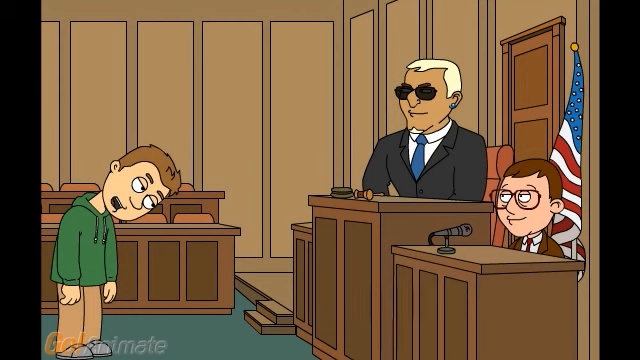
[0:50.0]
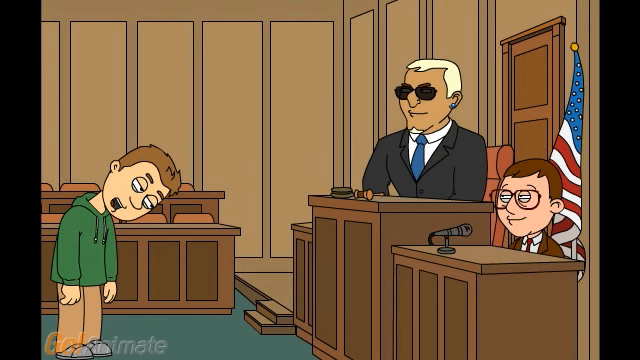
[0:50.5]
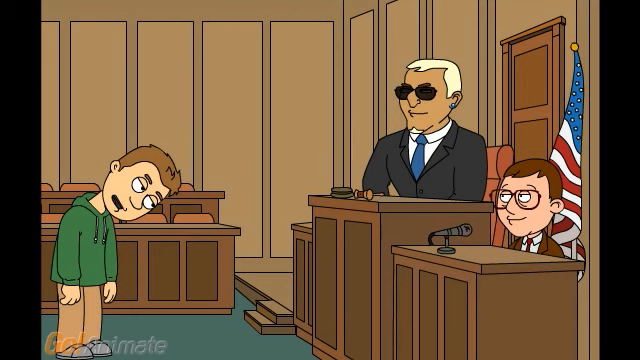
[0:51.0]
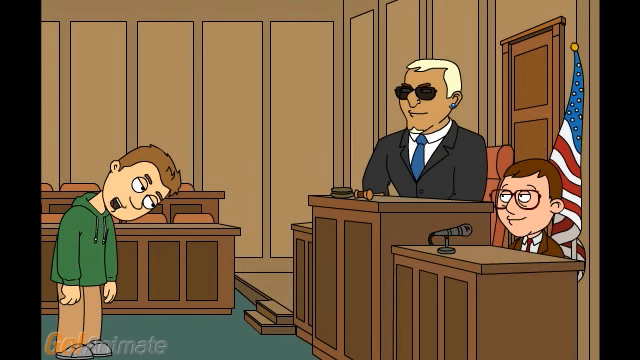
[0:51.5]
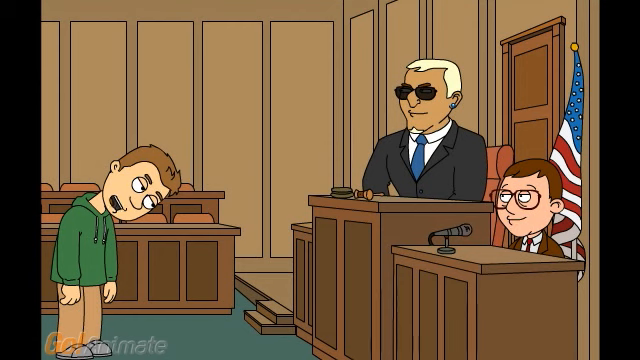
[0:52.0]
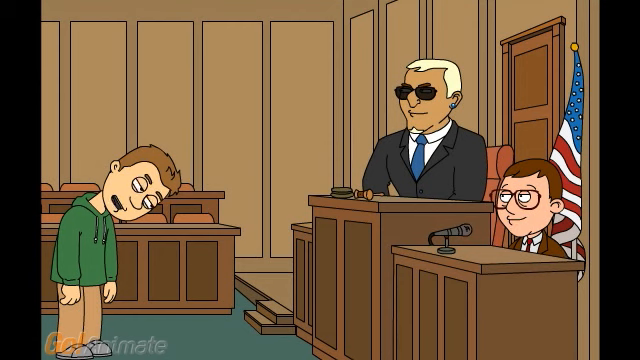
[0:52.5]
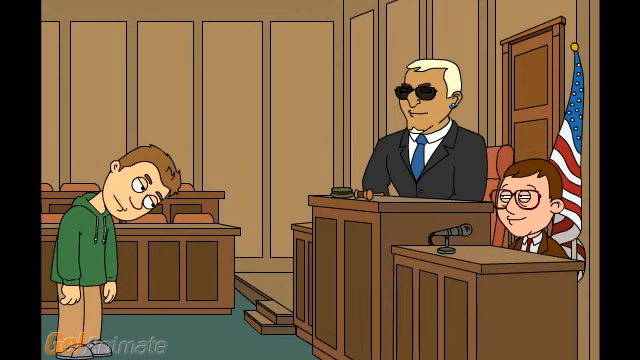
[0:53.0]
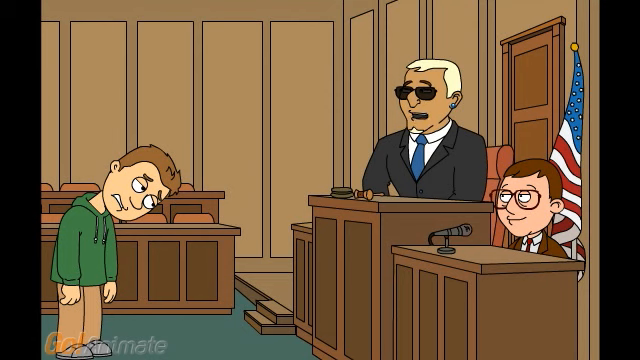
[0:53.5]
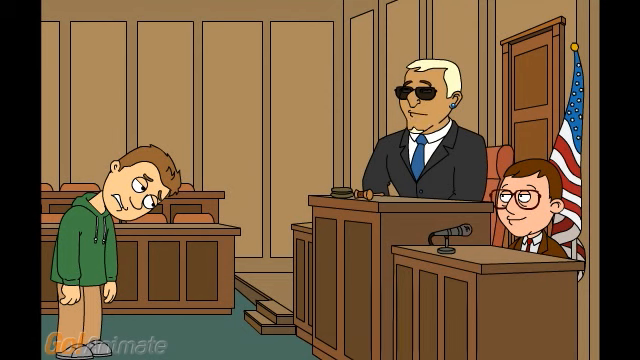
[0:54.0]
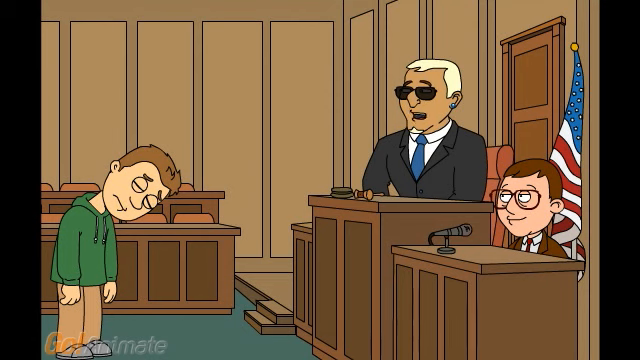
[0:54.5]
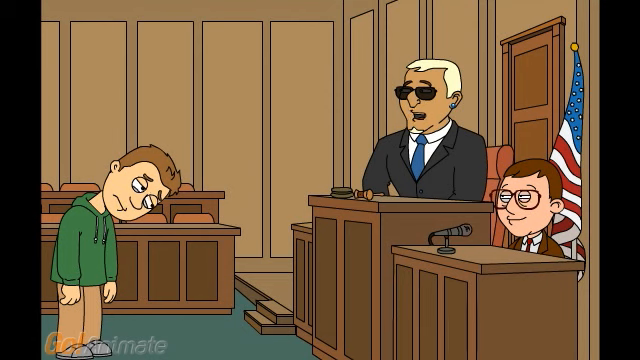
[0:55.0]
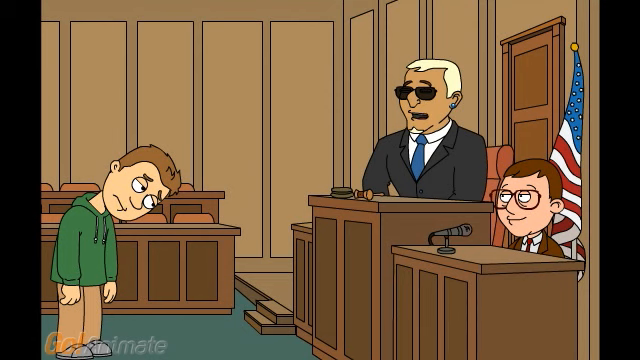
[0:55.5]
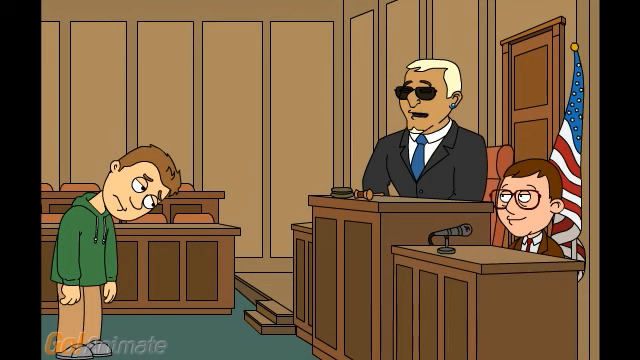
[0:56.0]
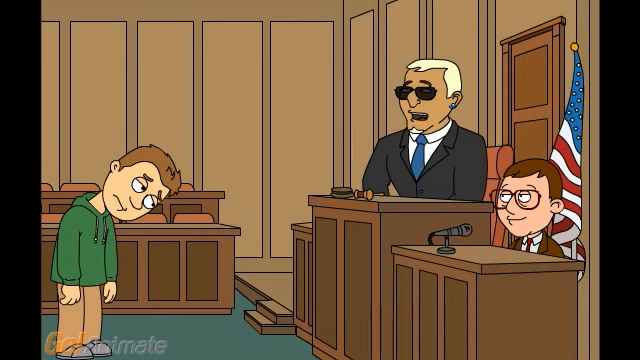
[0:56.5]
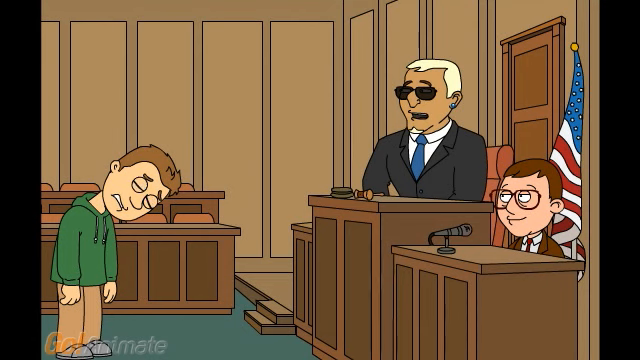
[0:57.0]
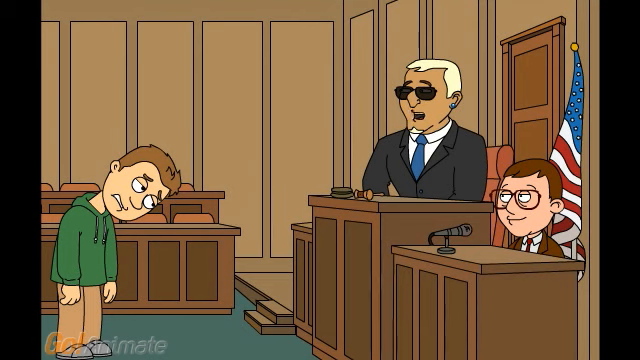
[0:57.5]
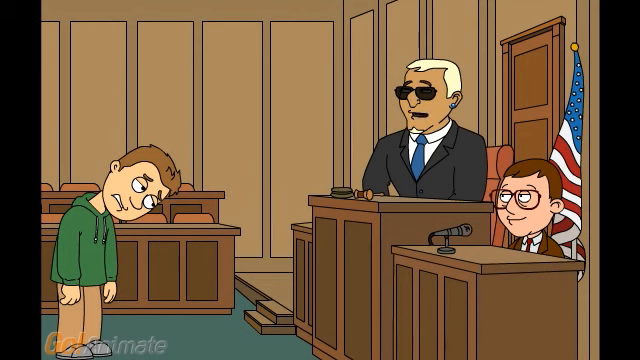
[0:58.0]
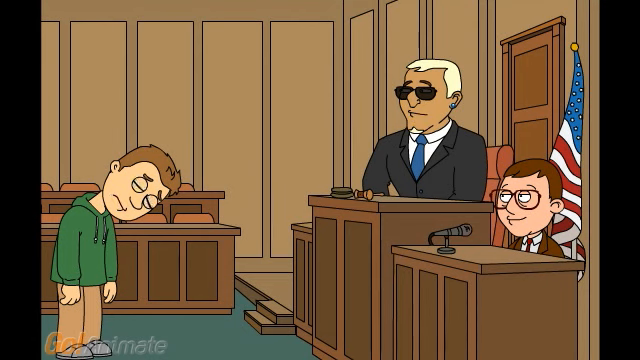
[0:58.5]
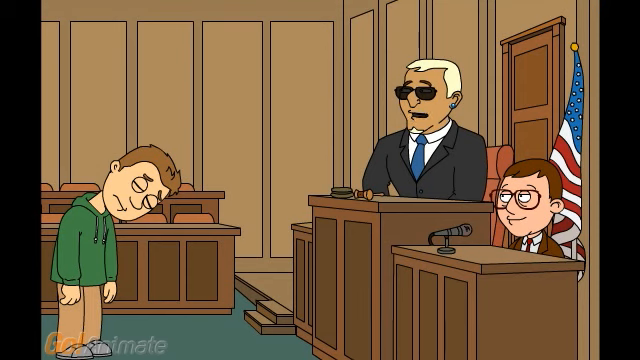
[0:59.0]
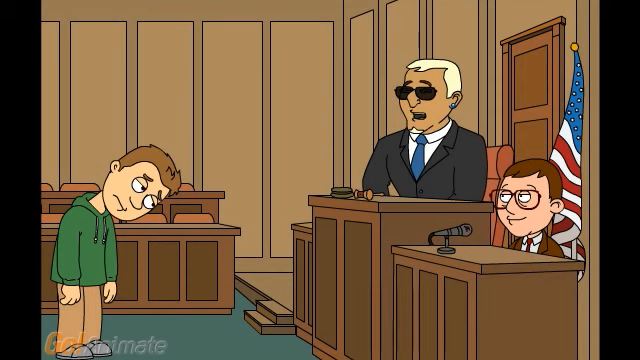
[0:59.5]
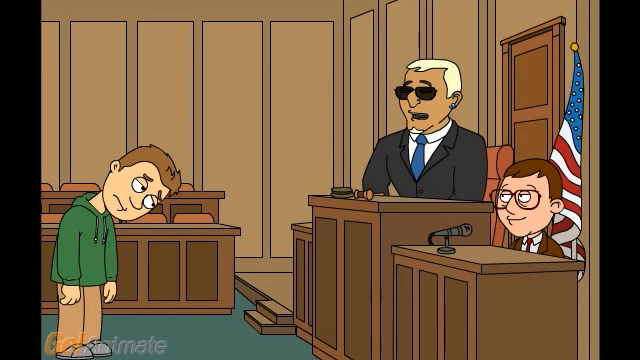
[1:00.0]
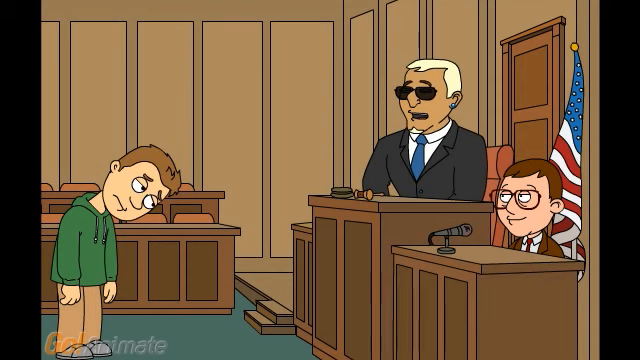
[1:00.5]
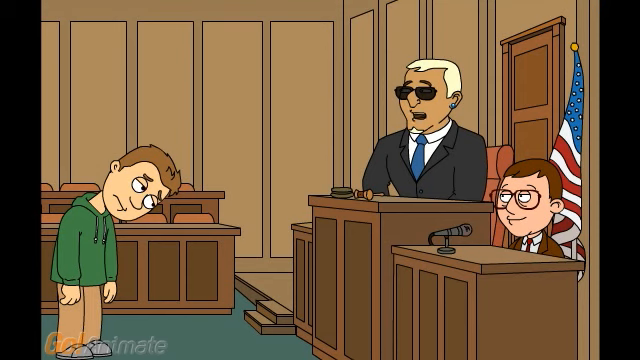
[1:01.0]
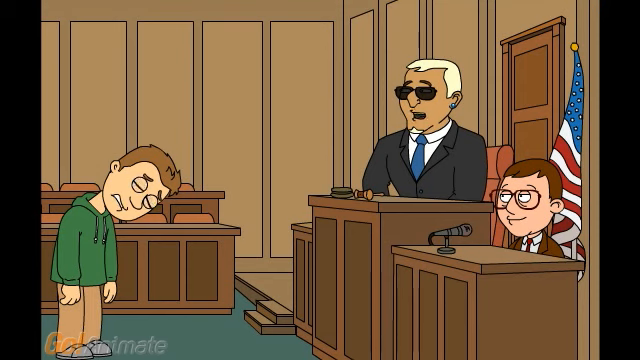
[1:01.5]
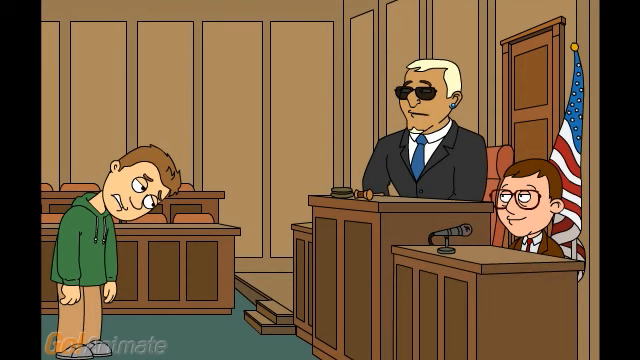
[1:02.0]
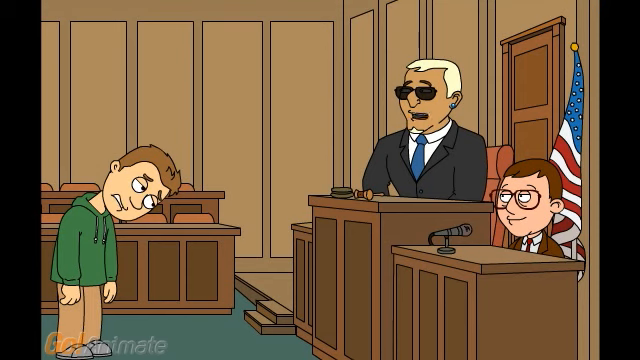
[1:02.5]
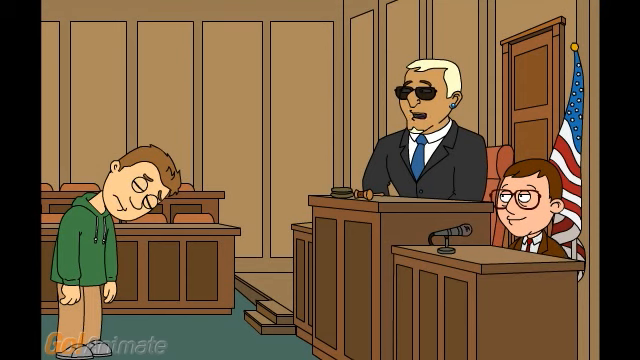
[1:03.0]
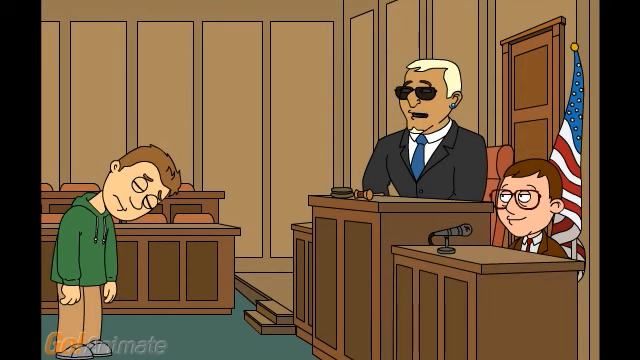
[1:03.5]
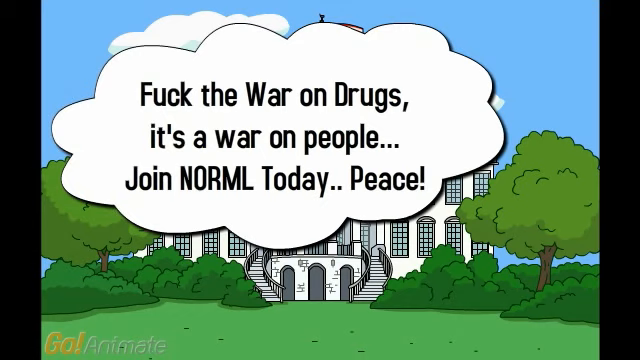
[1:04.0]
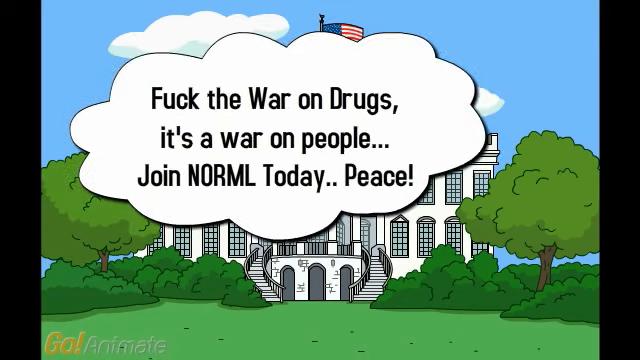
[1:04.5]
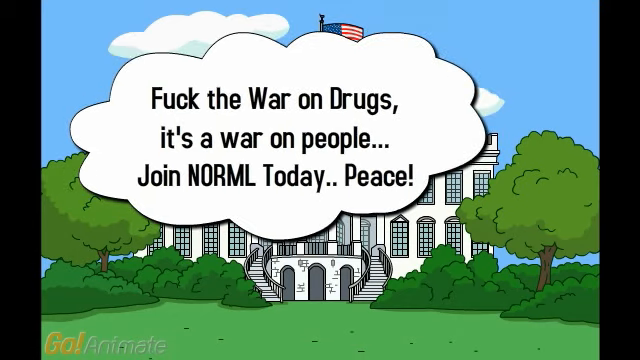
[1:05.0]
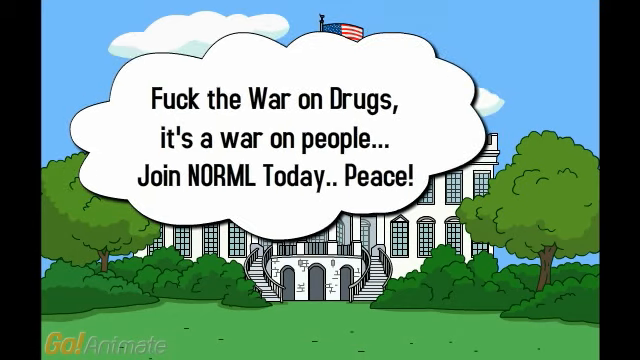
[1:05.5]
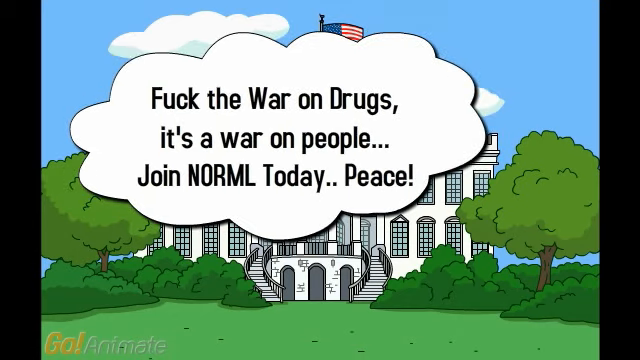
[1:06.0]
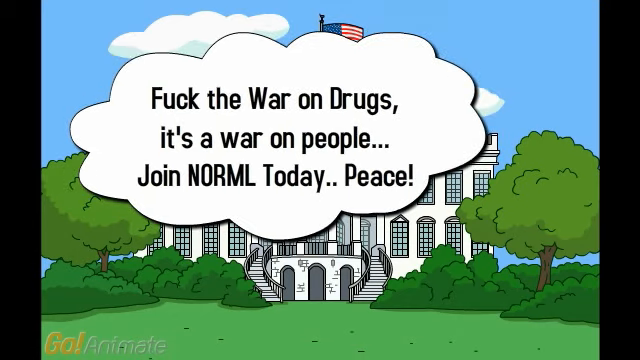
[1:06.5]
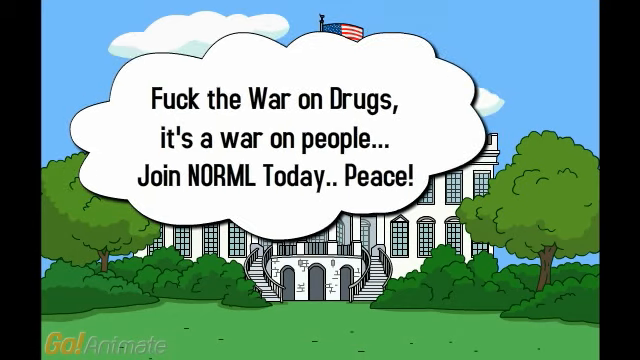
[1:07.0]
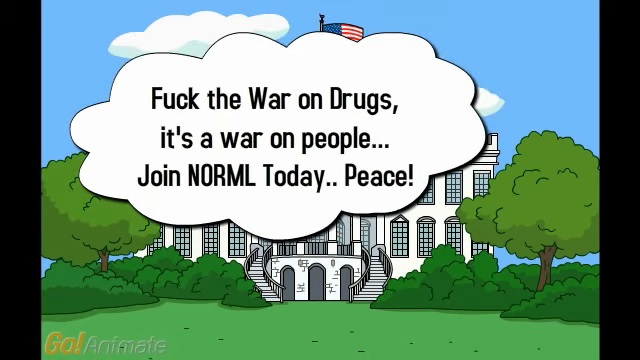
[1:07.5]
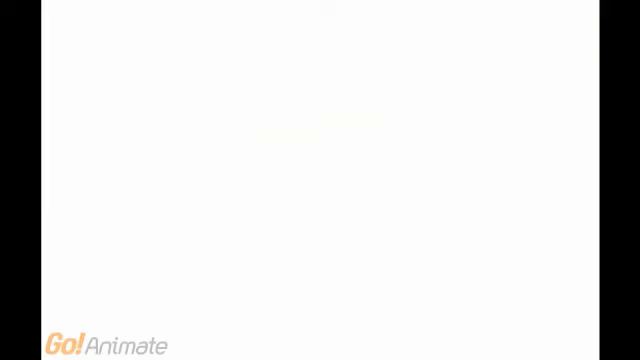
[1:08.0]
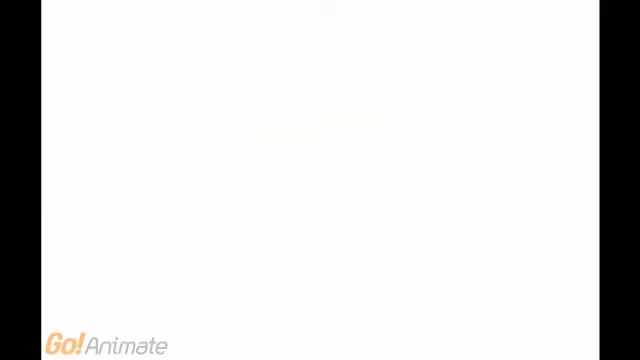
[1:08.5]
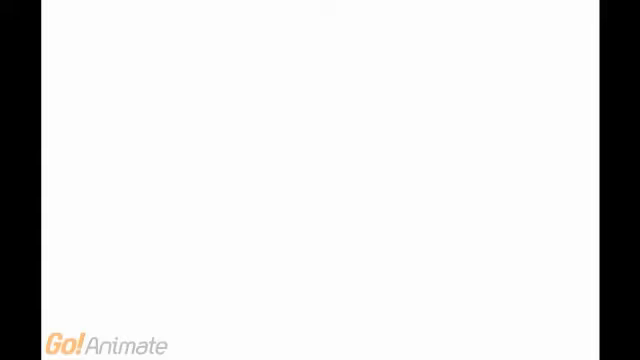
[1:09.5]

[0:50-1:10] A man is at the microphone, and the man in the suit is also seated. An inscription reads "fuck the war on drugs, it's a war on people".